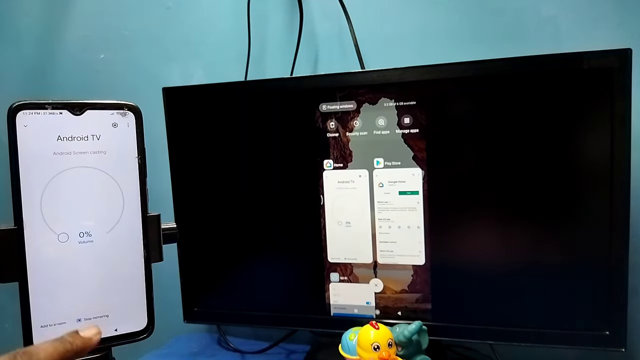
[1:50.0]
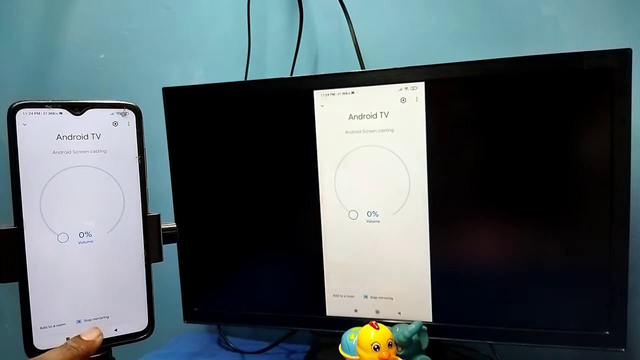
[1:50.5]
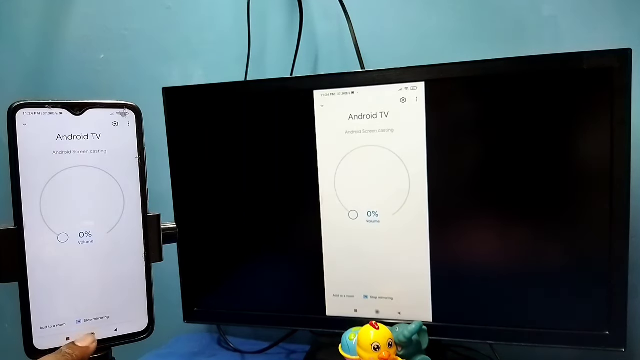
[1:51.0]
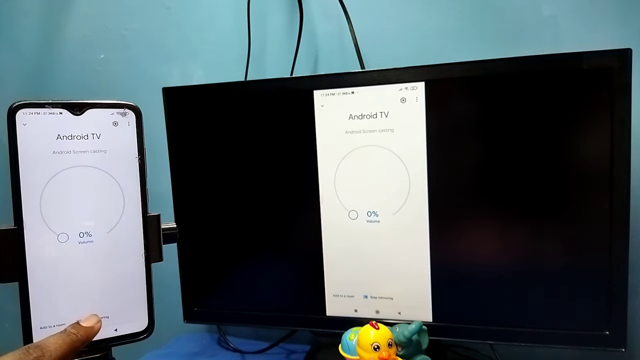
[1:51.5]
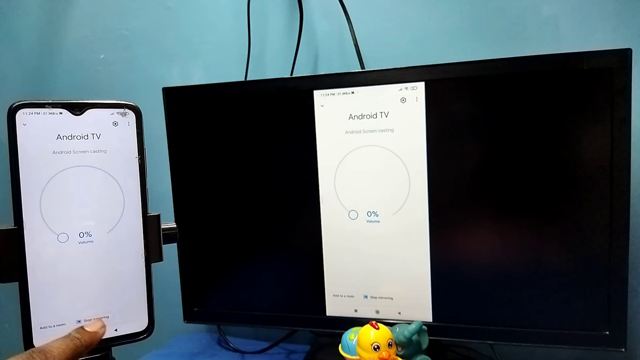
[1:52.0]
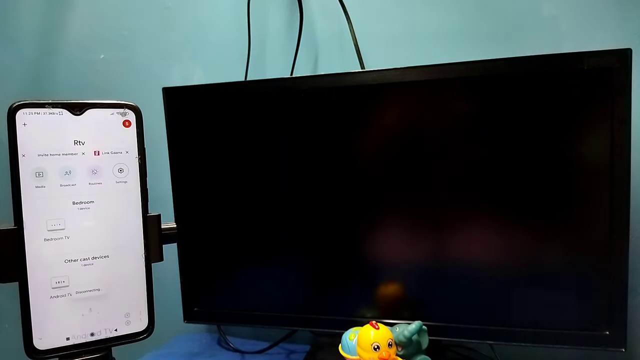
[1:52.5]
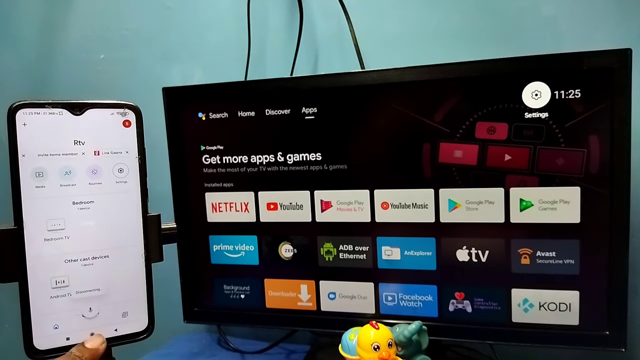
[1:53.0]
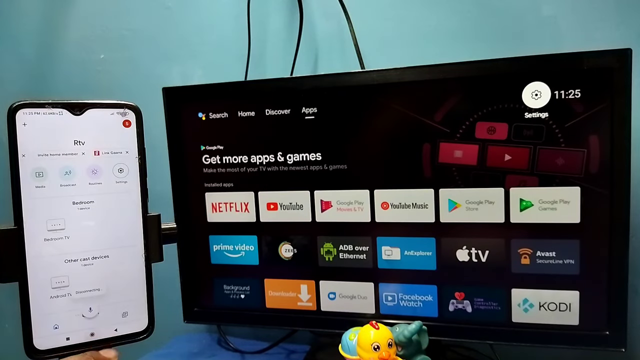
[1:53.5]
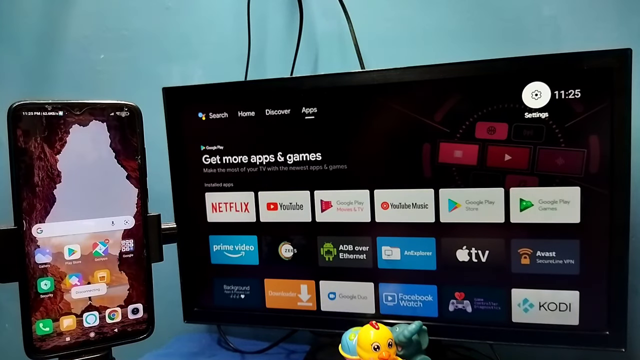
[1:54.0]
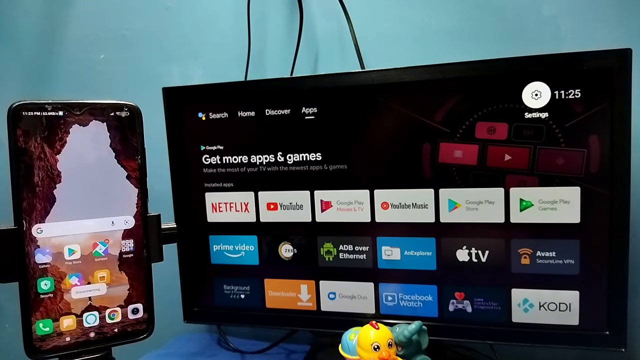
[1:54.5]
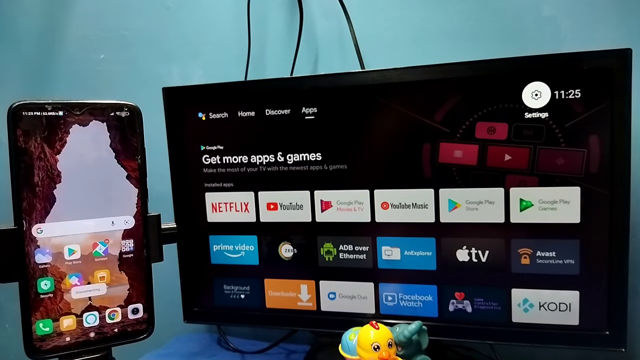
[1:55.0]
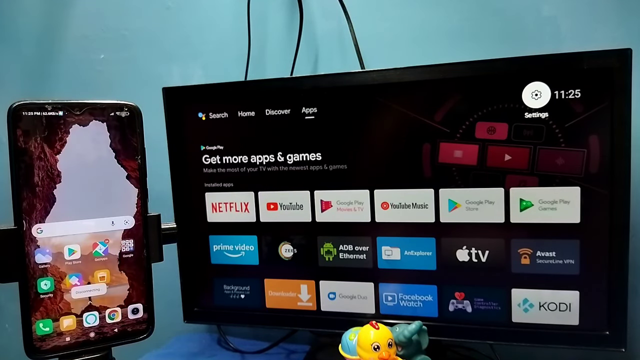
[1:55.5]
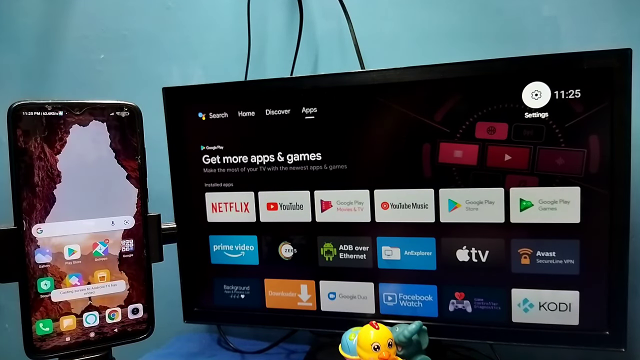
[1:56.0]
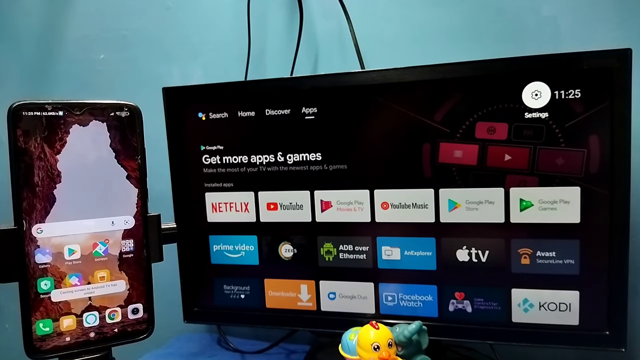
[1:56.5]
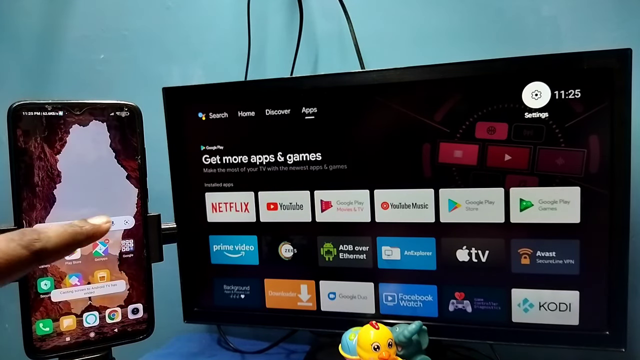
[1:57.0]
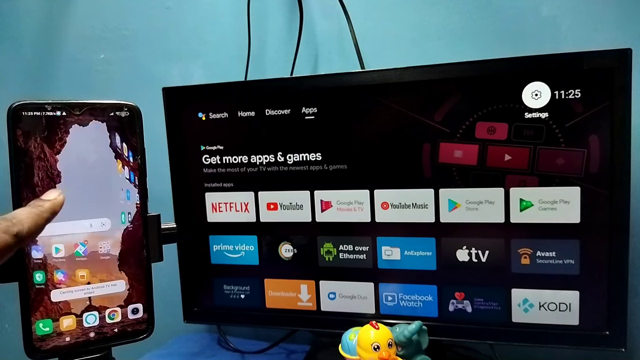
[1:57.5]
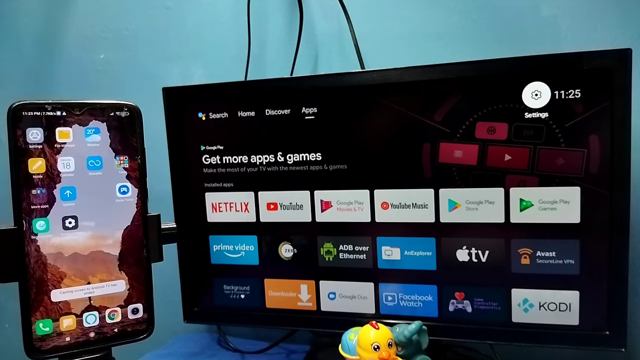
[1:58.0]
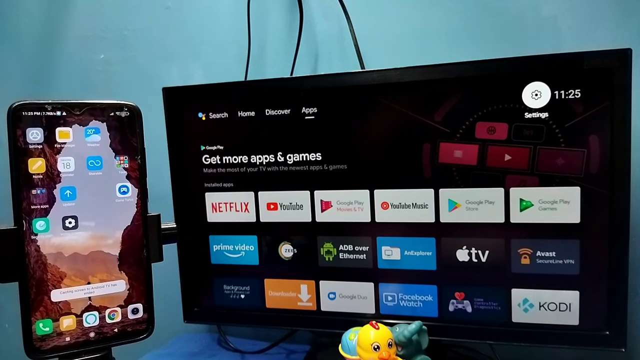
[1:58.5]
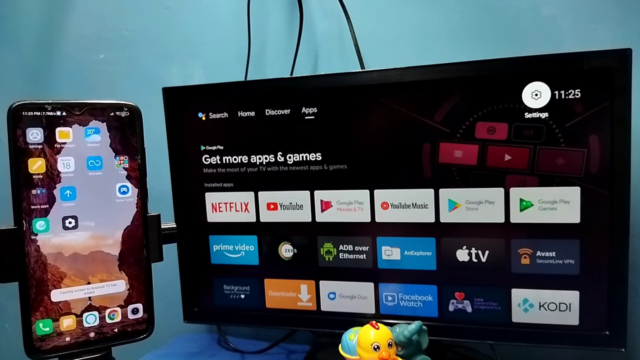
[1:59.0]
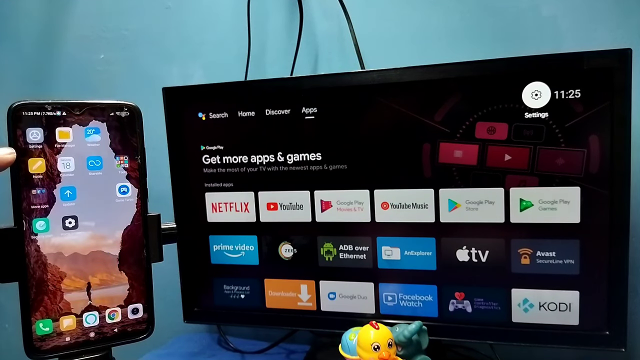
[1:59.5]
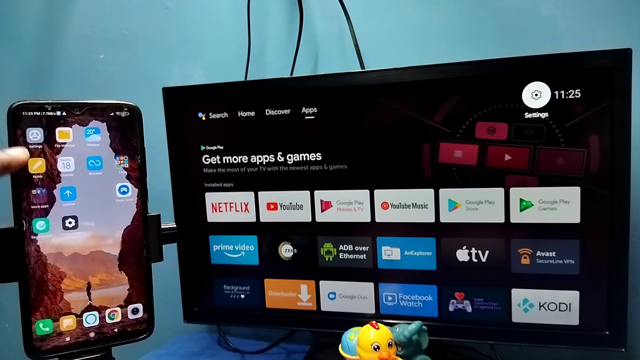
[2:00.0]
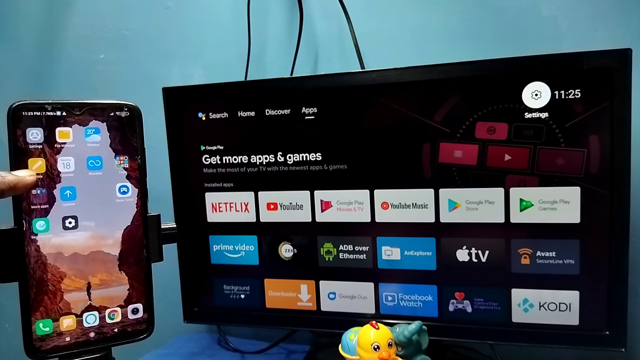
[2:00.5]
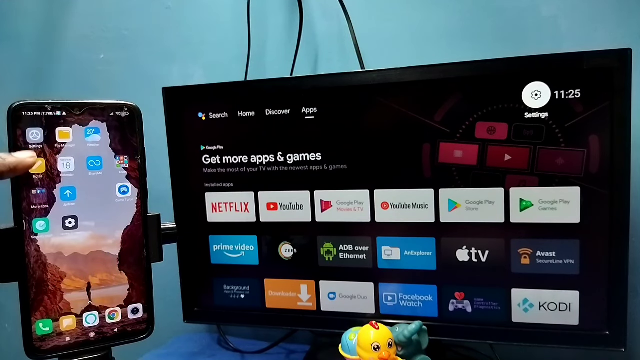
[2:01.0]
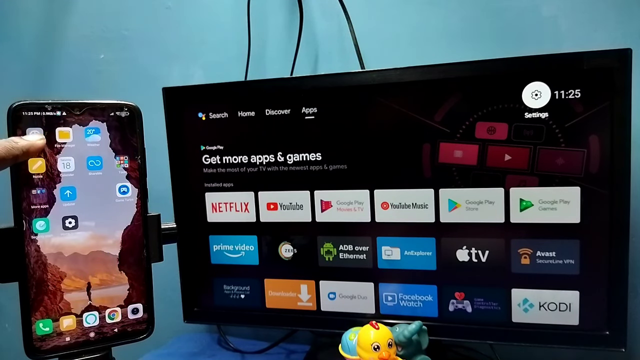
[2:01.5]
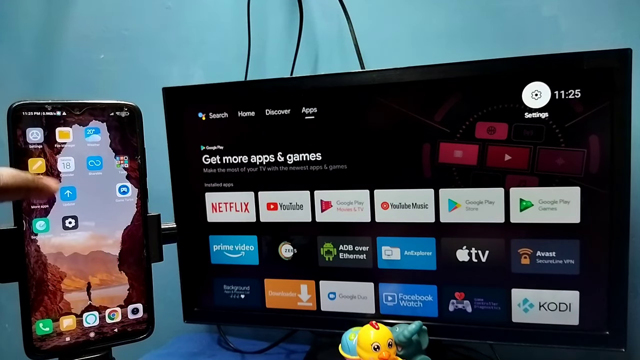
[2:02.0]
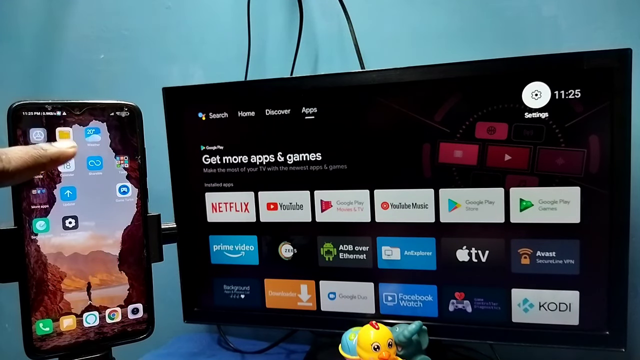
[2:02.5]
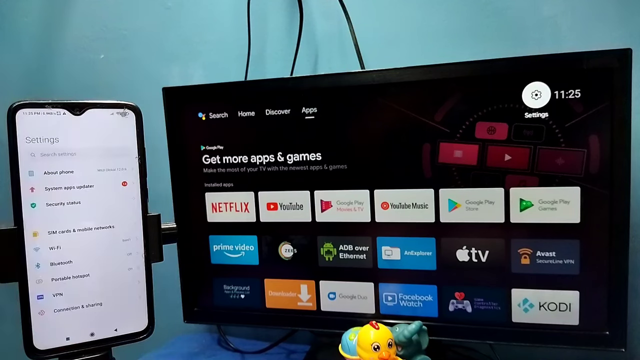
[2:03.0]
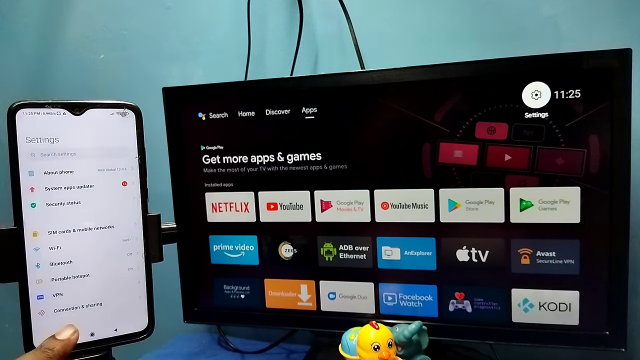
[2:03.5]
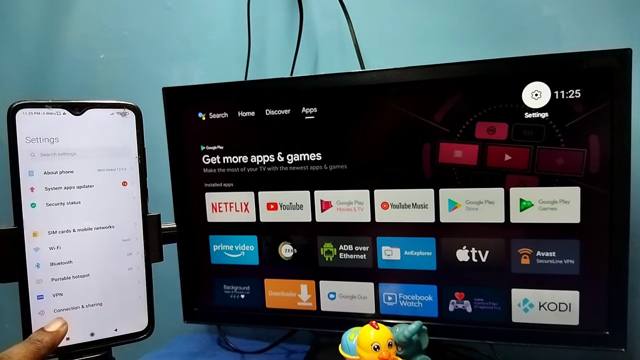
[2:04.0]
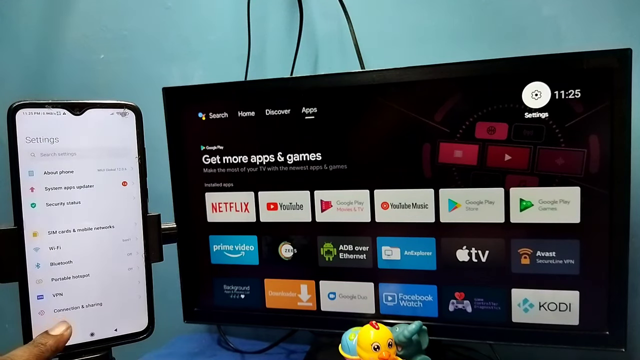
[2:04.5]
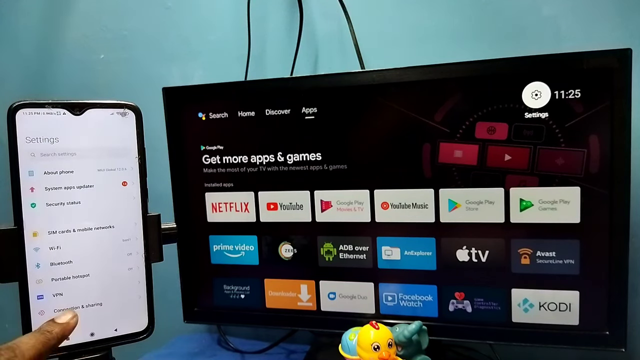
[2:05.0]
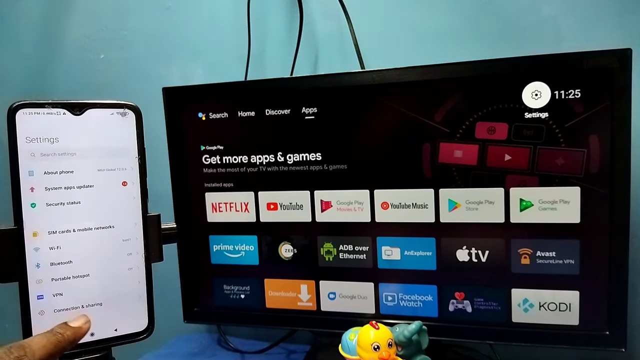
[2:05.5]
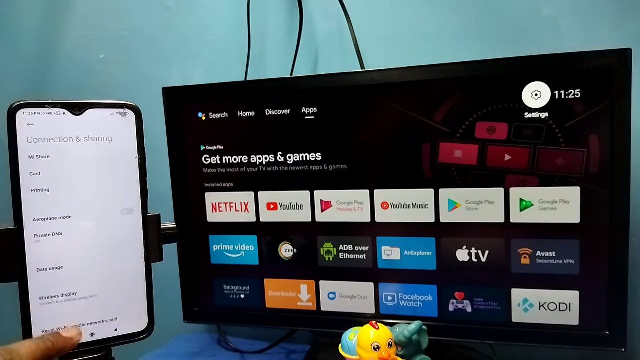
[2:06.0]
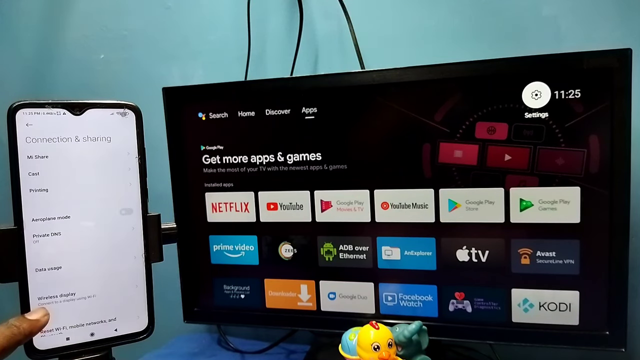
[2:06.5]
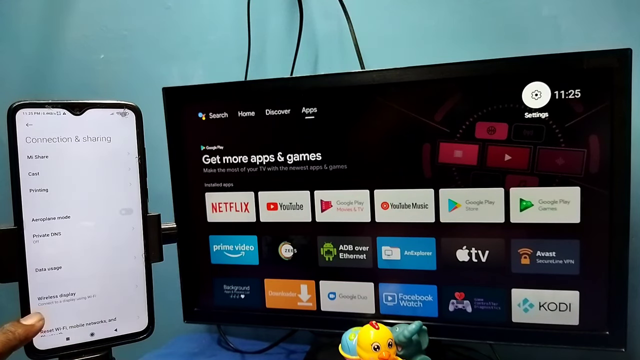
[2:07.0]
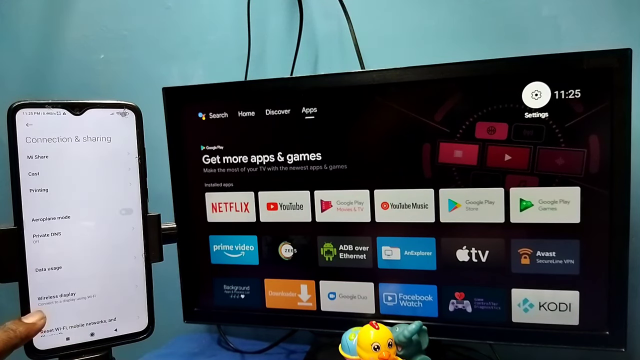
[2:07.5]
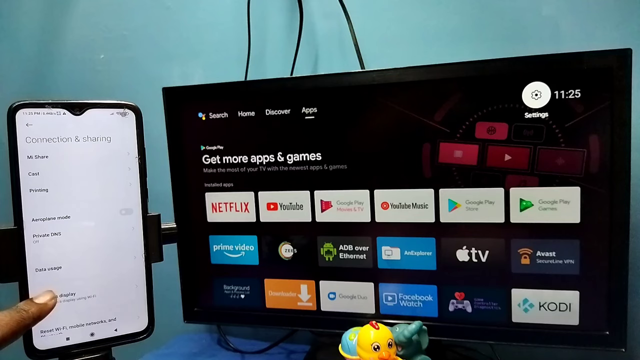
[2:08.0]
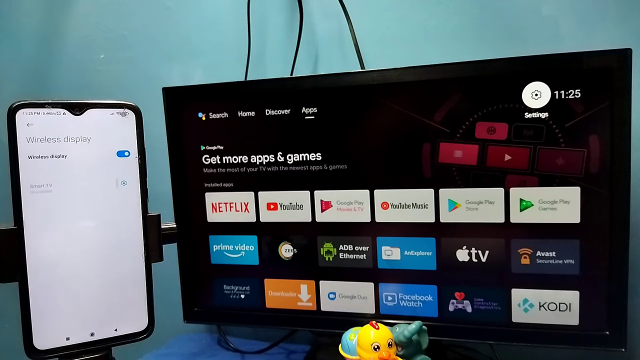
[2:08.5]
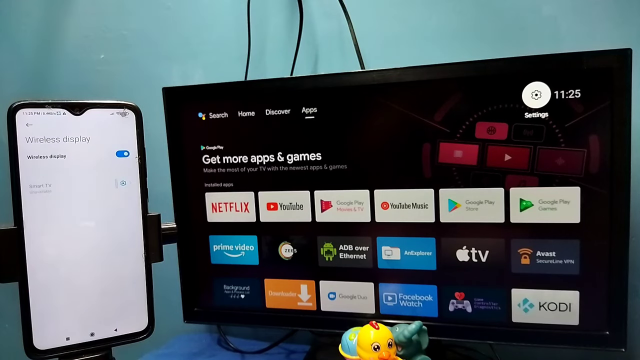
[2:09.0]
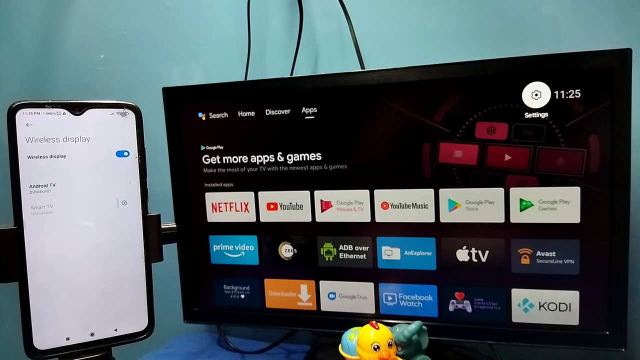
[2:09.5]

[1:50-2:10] Android and TV pages are paged through on the cell phone and shown on the flat screen. It starts with Android TV, then he pages through and presses the settings app, goes to connectivity and sharing, connection sharing, and wireless display, which then shows up from the phone on the flat screen, a flat monitor of some kind.